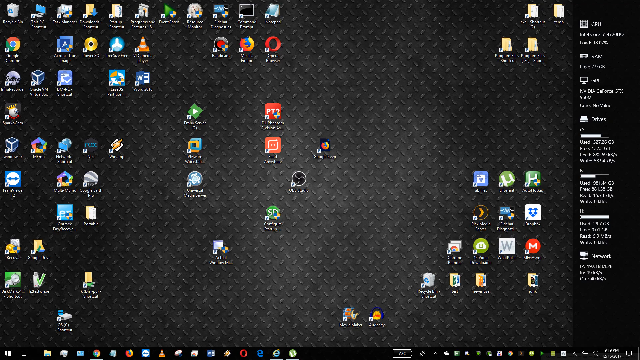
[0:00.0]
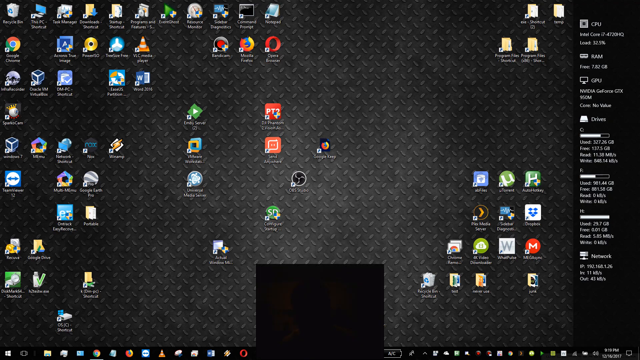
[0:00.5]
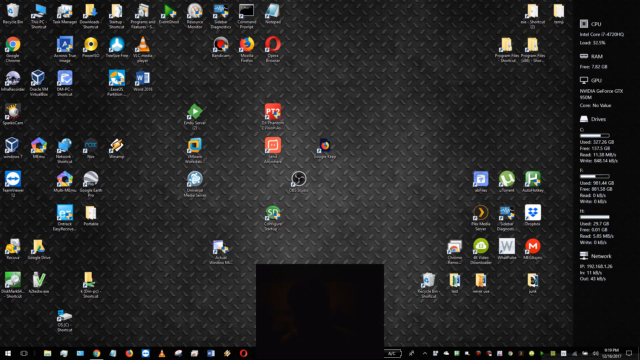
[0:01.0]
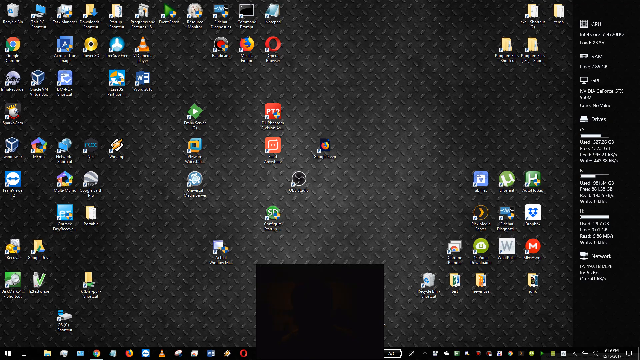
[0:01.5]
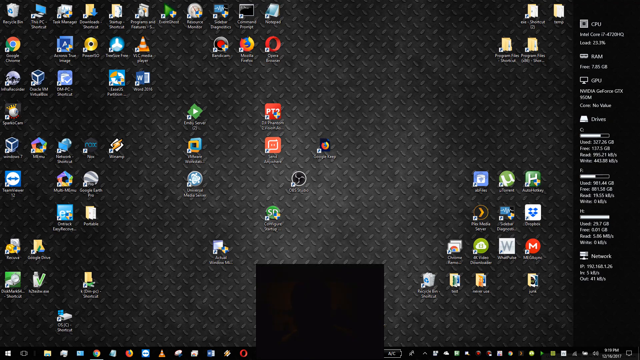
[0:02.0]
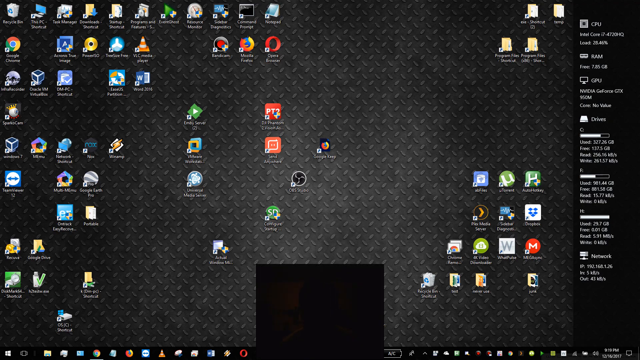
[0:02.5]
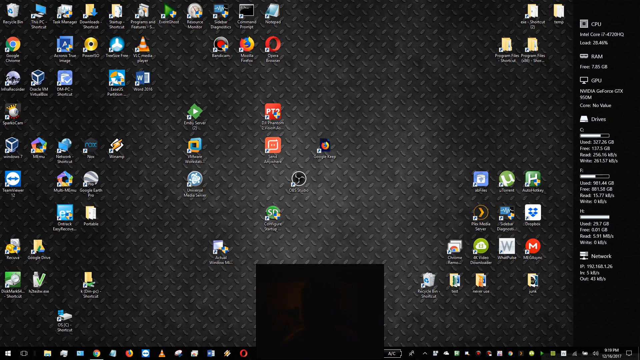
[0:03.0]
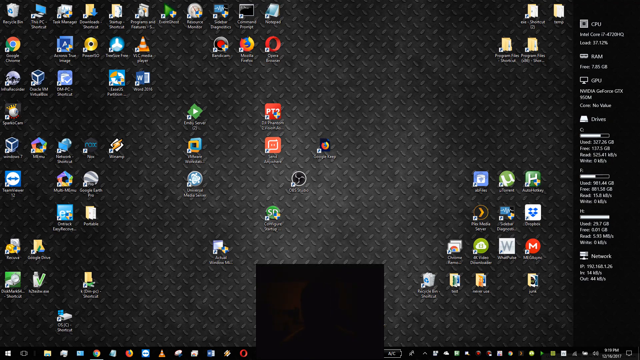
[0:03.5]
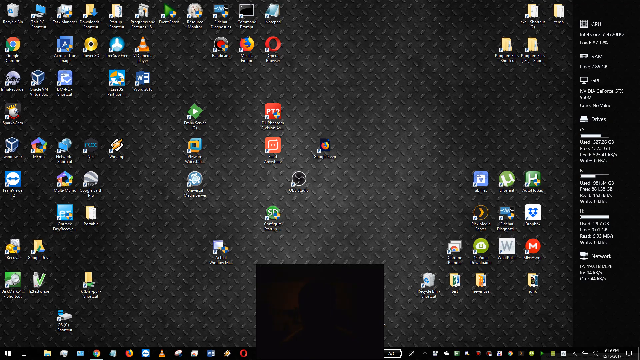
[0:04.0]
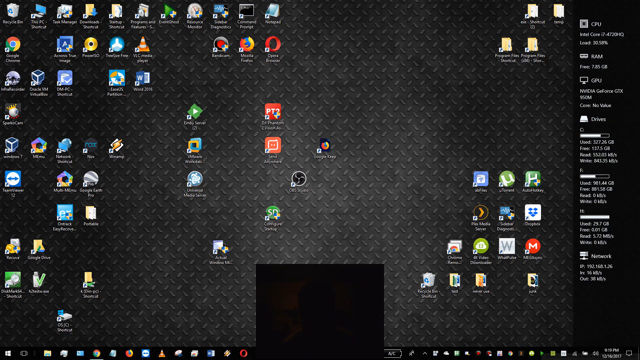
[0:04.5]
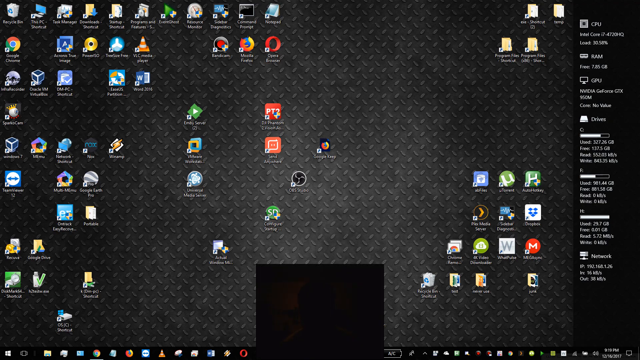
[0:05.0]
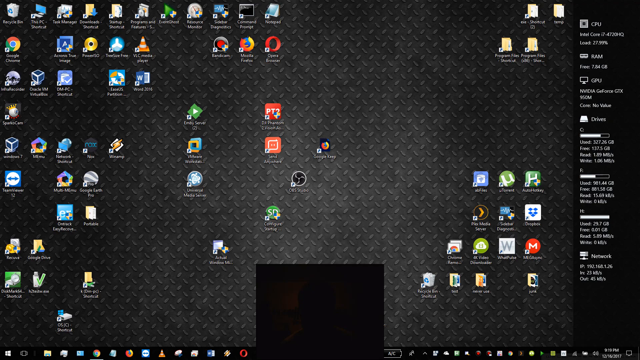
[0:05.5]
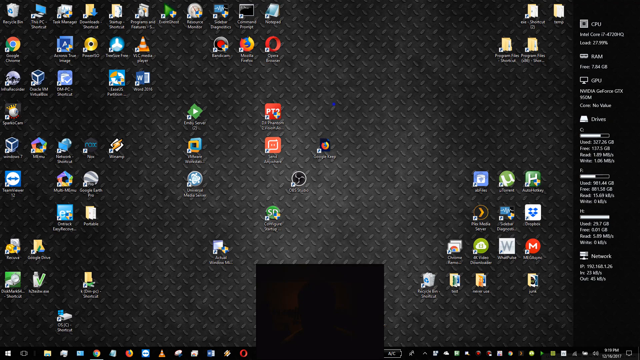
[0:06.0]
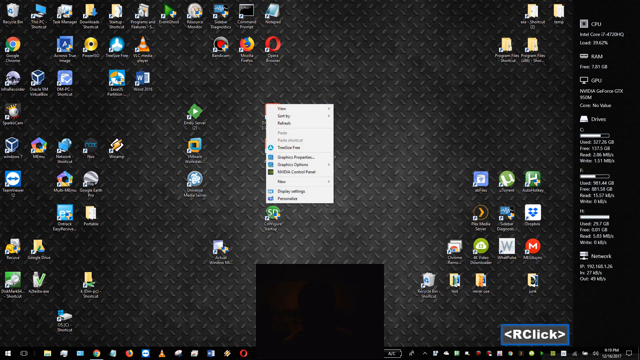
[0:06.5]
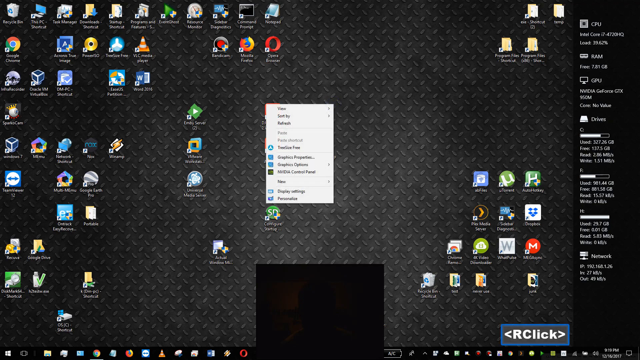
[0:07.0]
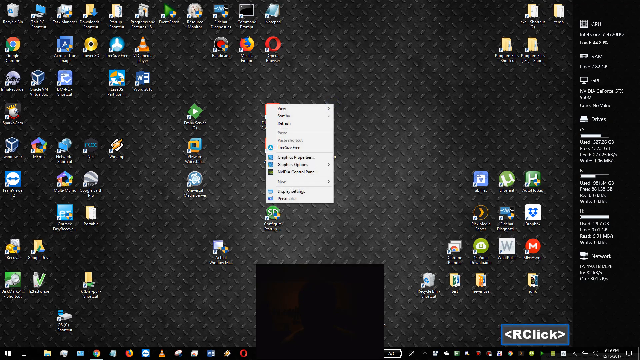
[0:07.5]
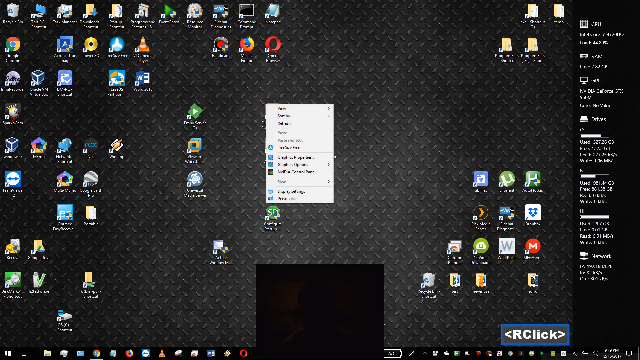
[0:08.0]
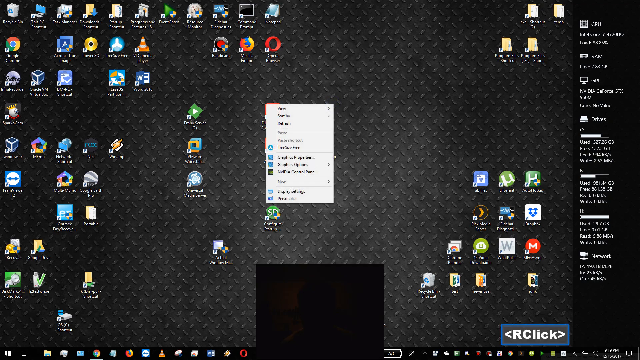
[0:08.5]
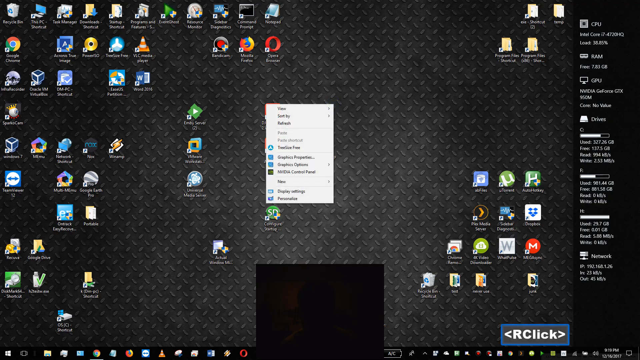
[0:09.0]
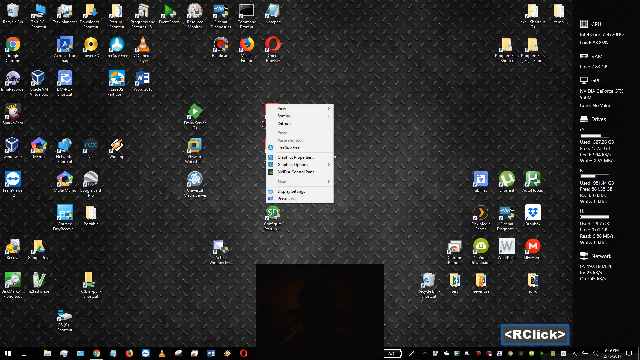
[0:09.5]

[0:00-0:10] What looks to be a computer desktop has a black background with a pattern that looks similar to tire tread. The desktop holds a lot of icons, ranging from the recycle bin in the top left corner to Google search and Mozilla Firefox more towards the top middle. The very middle has some apps whose text is blurry, making them a little hard to read. A small black rectangular box appears in the bottom middle, then a pop-up menu appears when the screen is right-clicked, different options on it are highlighted, and it disappears quickly.